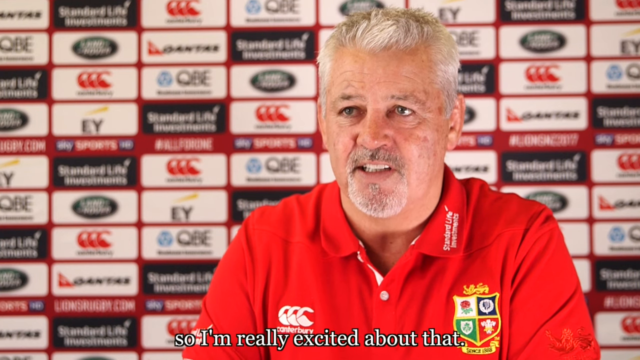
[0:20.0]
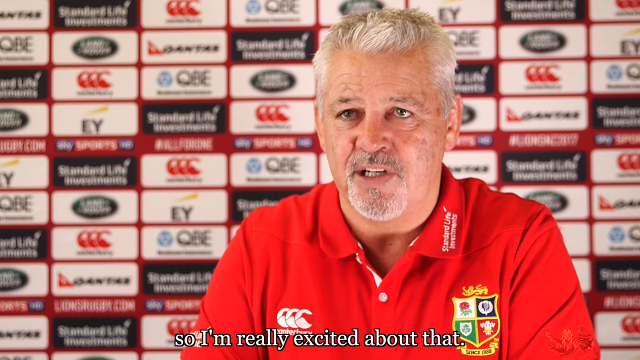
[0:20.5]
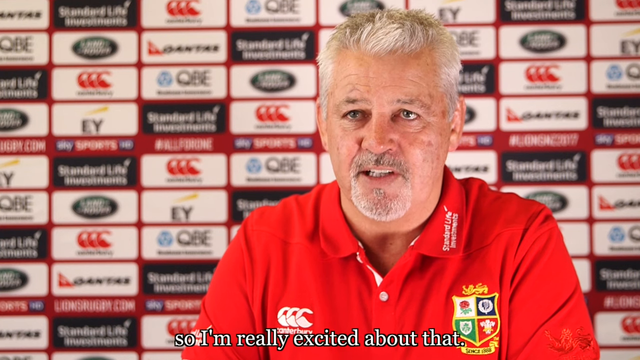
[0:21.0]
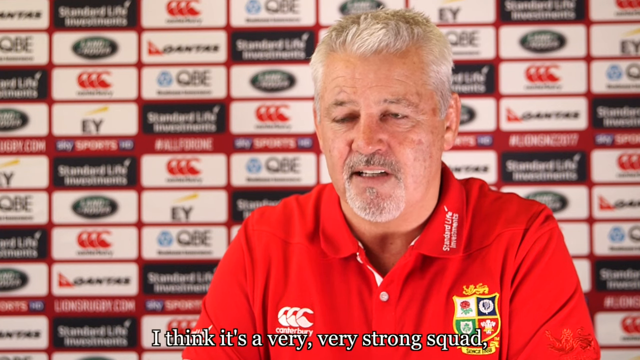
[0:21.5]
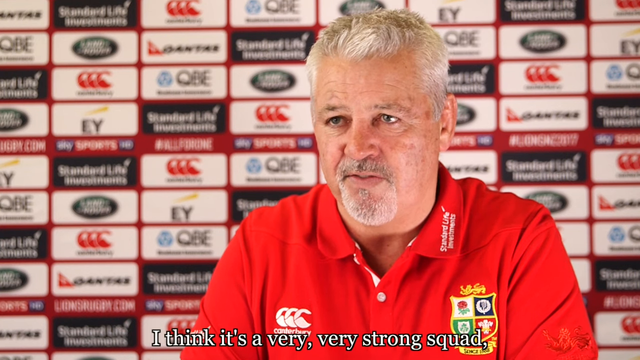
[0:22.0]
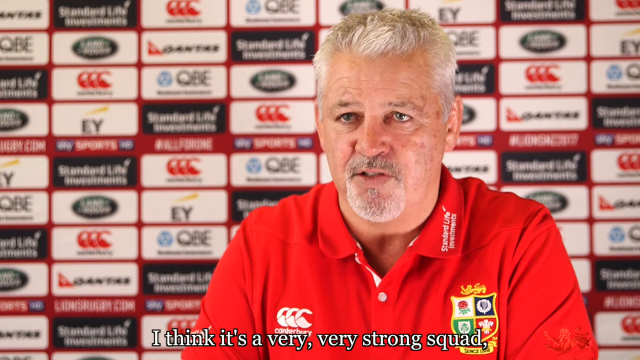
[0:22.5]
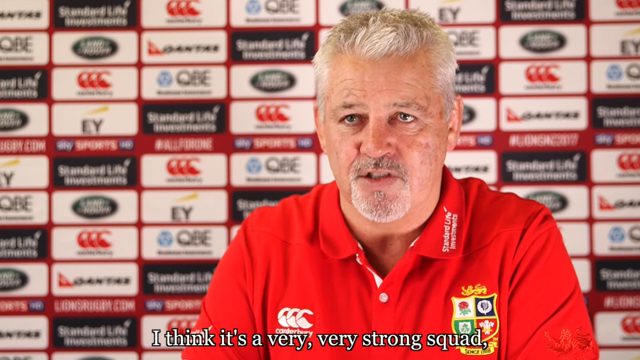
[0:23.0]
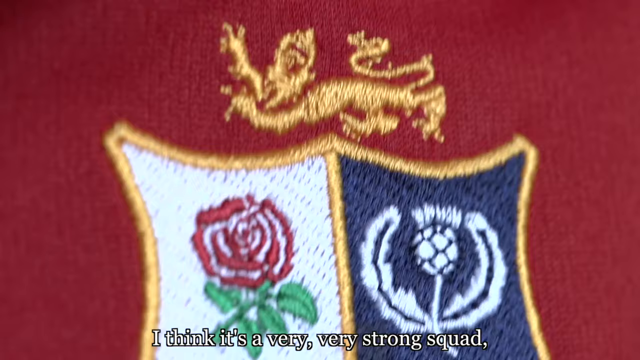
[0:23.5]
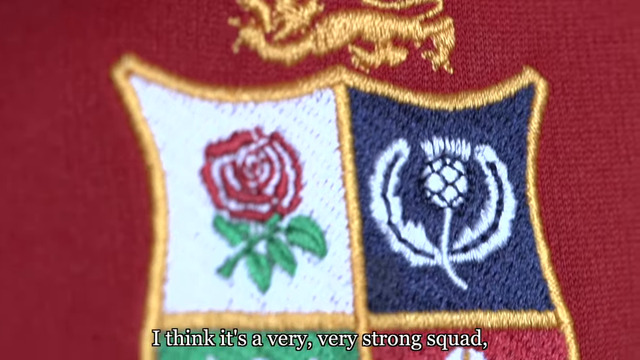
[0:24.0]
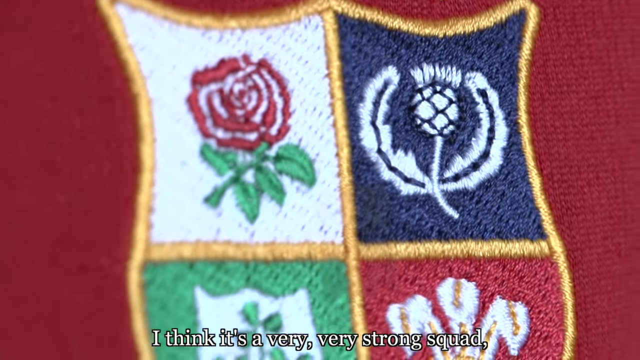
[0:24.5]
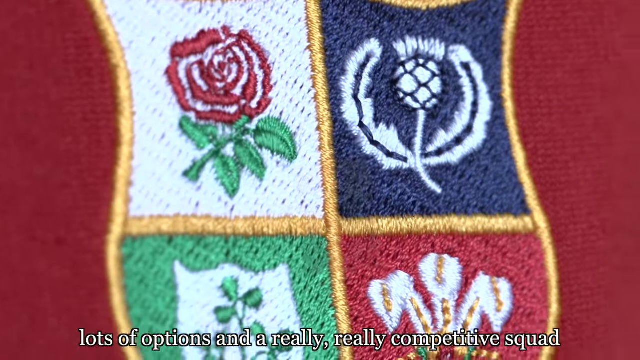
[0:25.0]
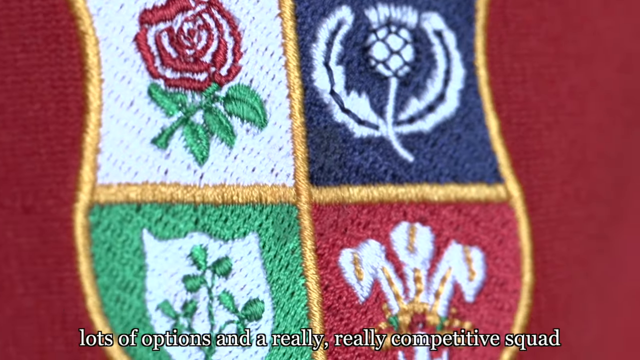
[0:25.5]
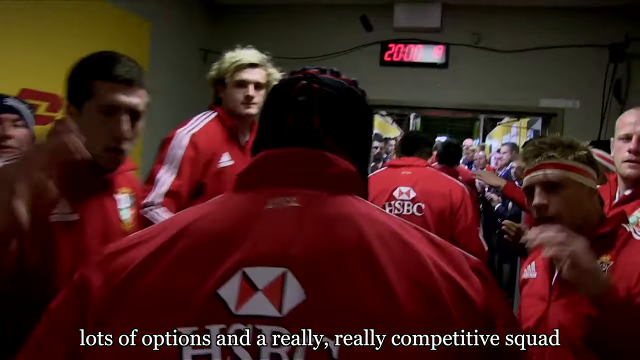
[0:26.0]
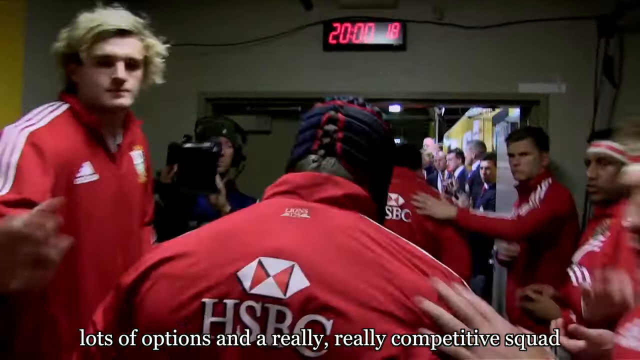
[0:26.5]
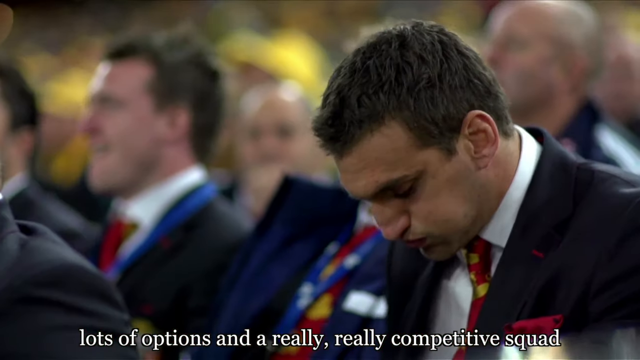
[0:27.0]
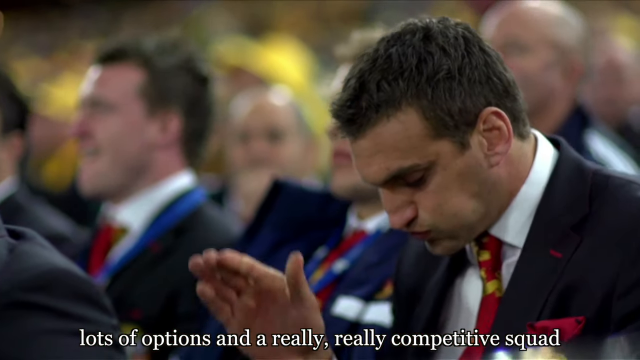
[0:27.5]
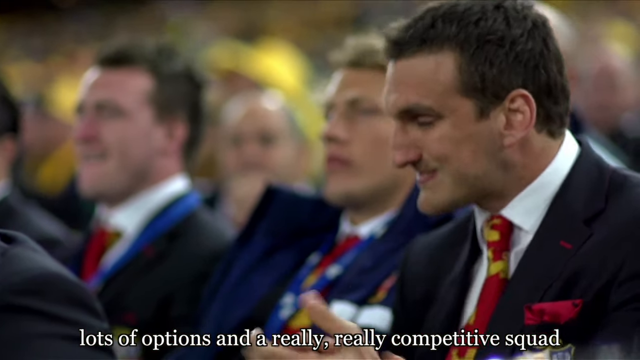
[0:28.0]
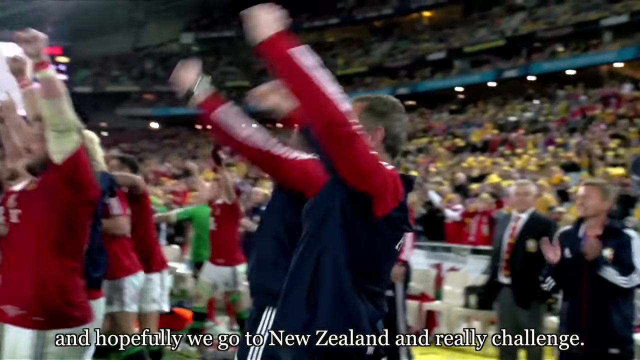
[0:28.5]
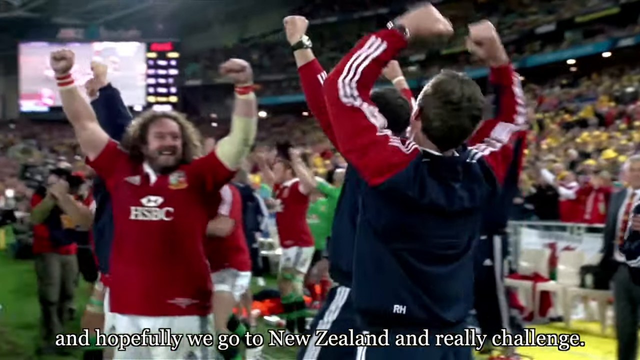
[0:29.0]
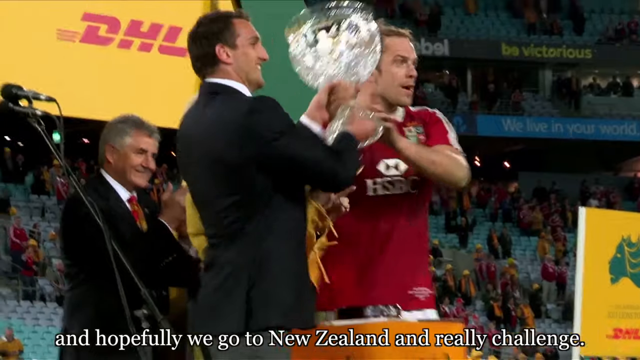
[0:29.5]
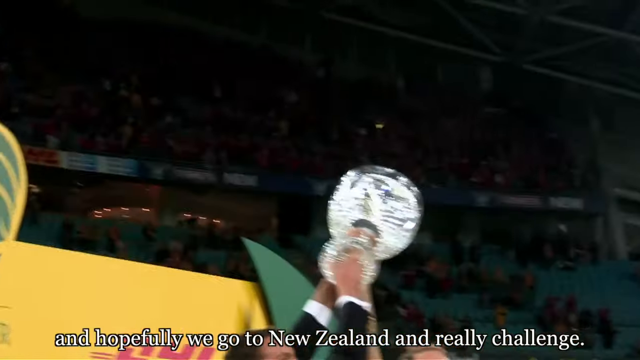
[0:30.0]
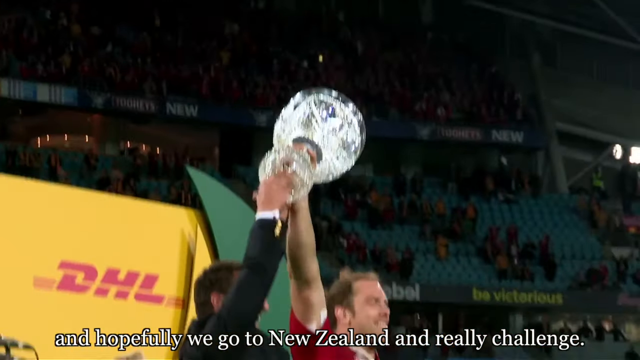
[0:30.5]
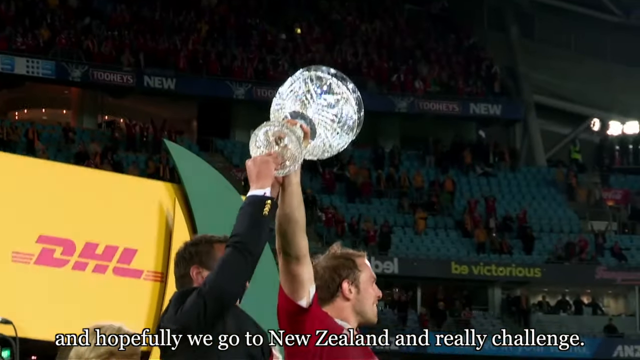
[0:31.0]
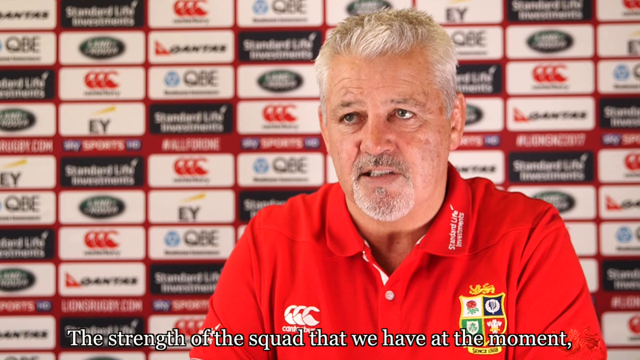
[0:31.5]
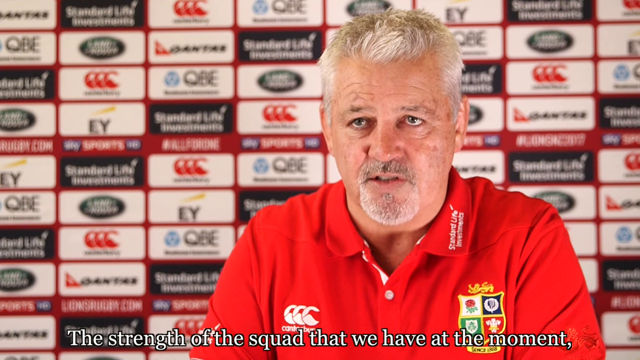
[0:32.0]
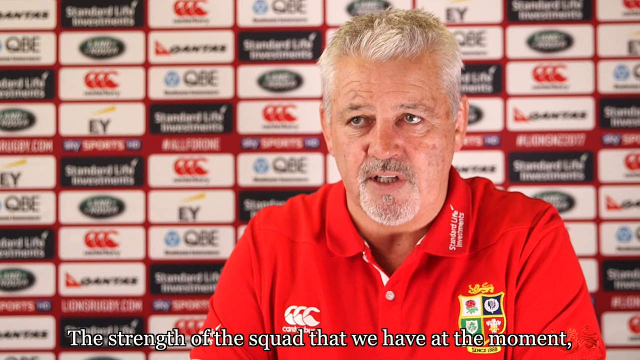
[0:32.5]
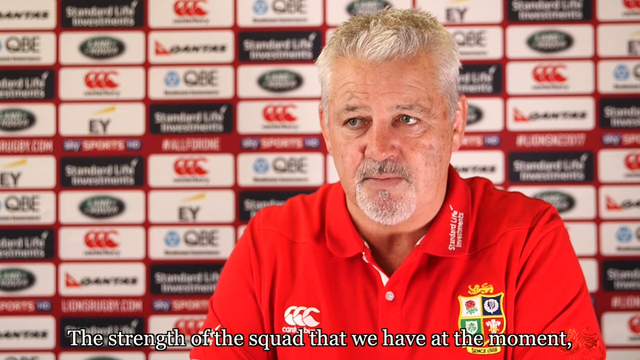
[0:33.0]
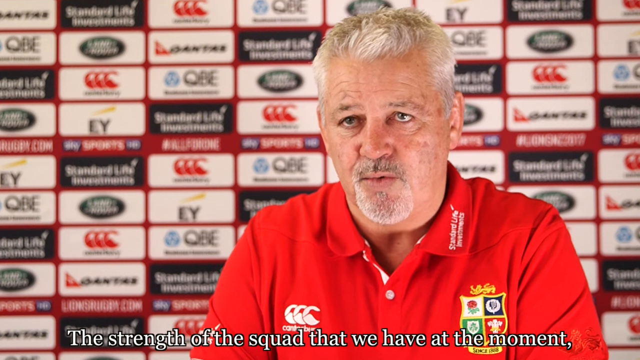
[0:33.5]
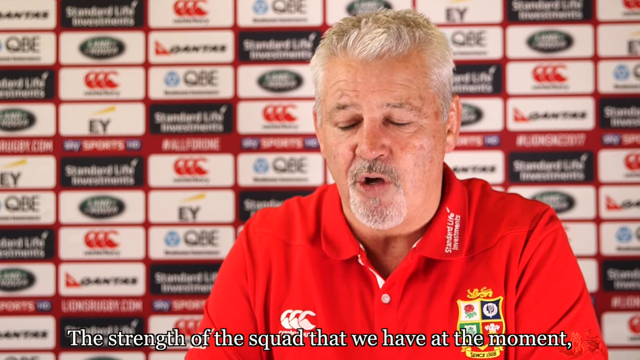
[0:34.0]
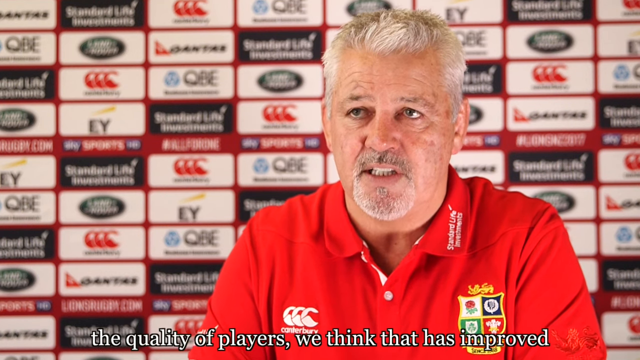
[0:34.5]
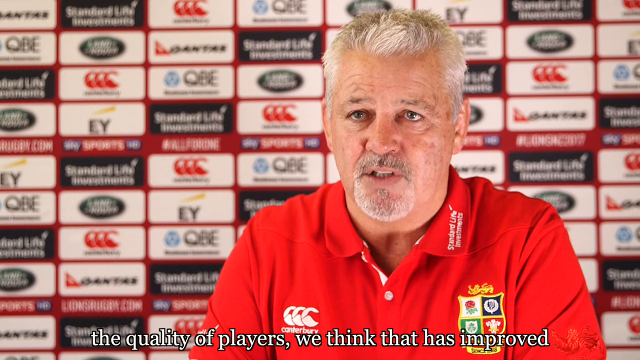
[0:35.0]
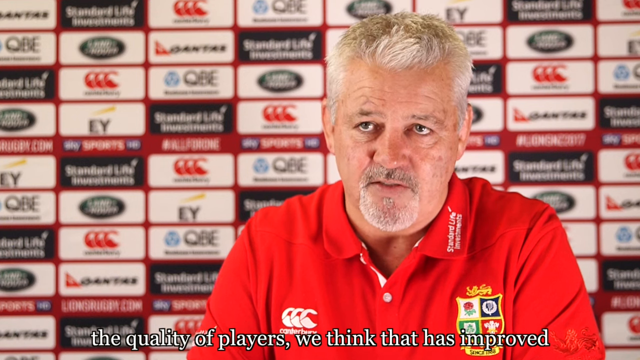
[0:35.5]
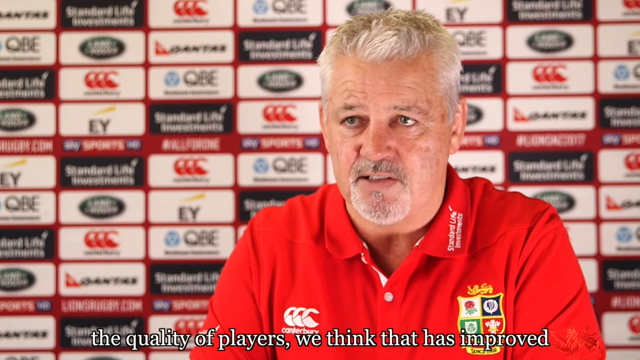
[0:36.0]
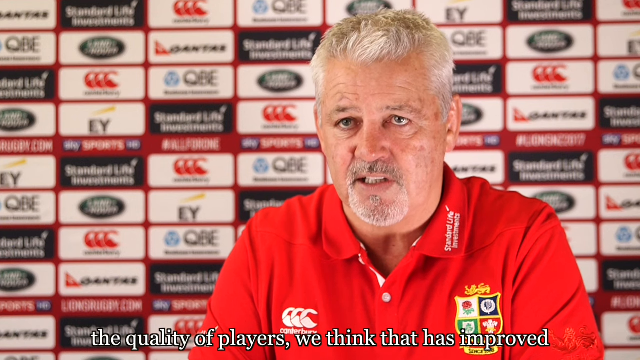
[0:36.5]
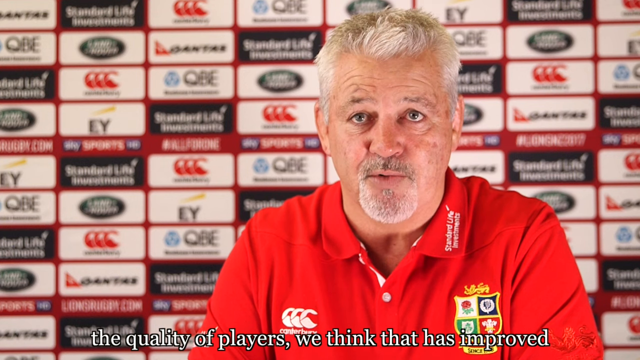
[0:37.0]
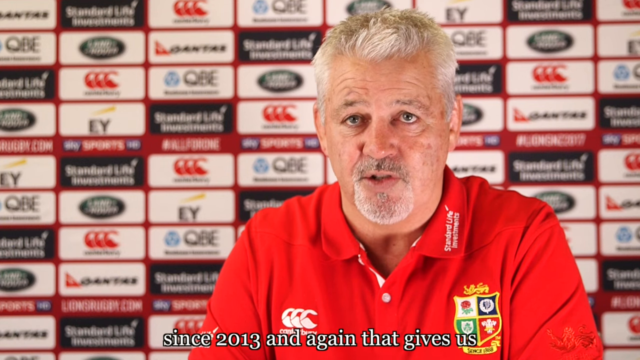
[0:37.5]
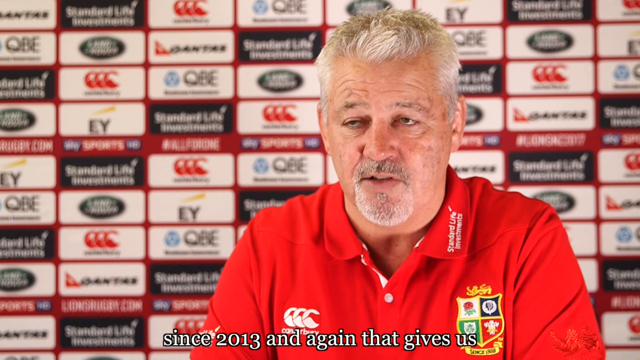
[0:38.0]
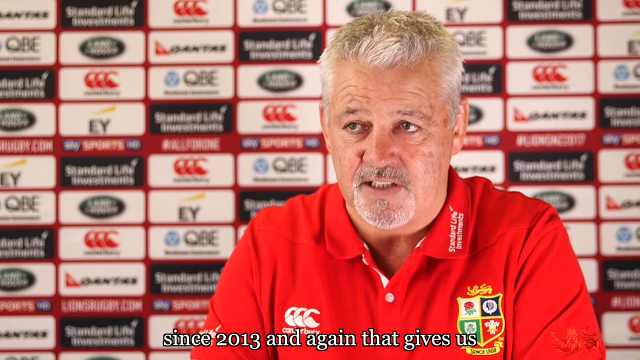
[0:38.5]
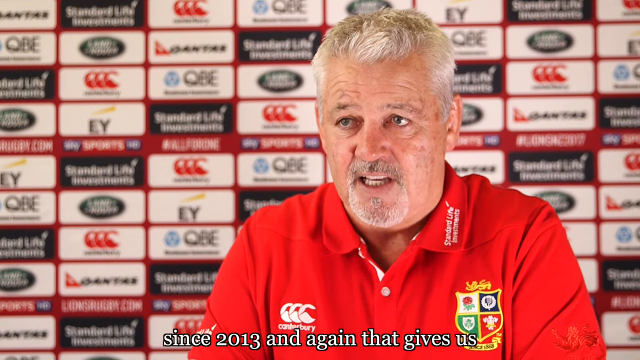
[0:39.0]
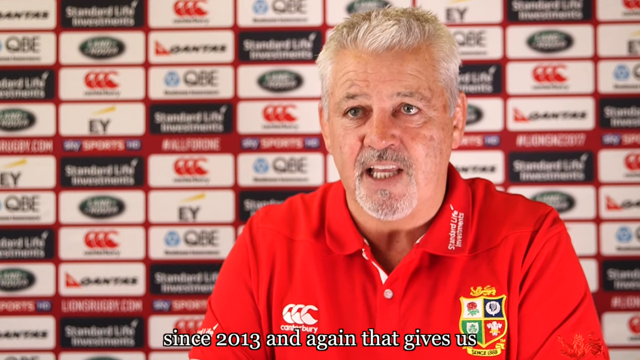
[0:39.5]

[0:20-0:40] The man, who looks like a coach, appears to be in his late 50s or early 60s, with greyish hair, and is wearing a red top. He is of medium build and is alone. The camera cuts to people celebrating after winning their match, then to the club's logo, and then back to the coach, who is seated at the event. Apart from the logo and "OBE," no text is noticeable.